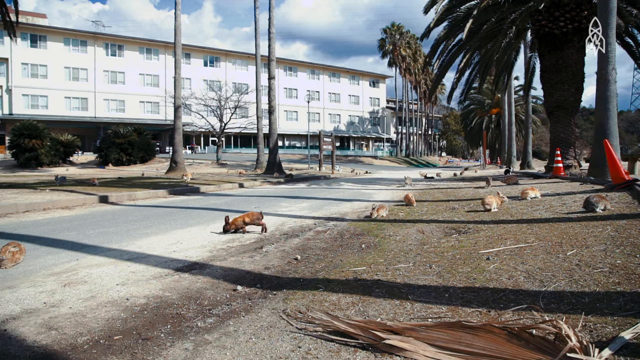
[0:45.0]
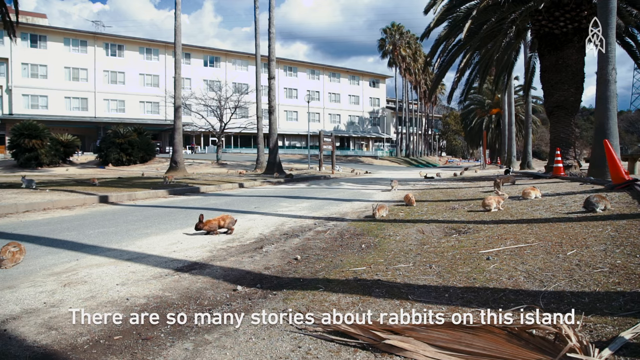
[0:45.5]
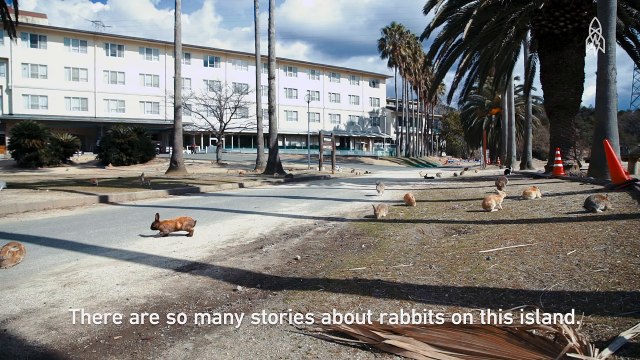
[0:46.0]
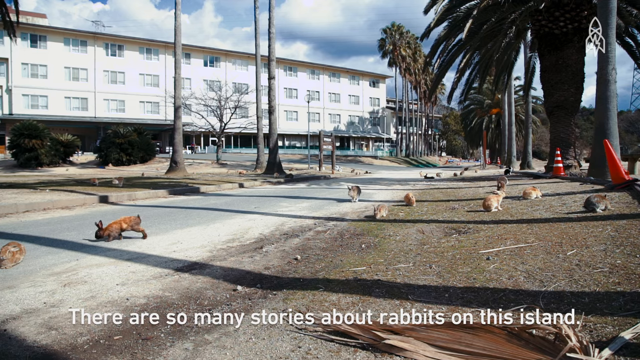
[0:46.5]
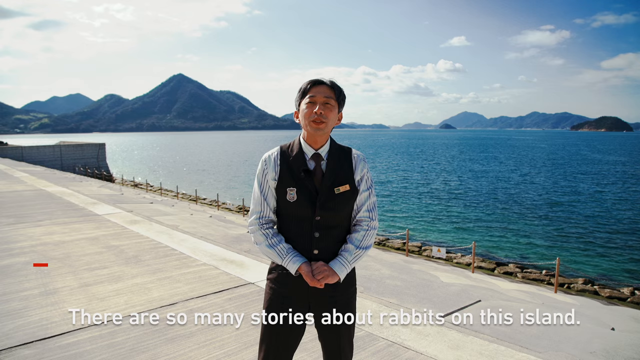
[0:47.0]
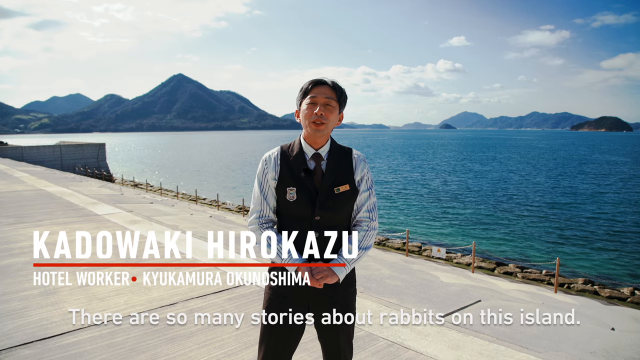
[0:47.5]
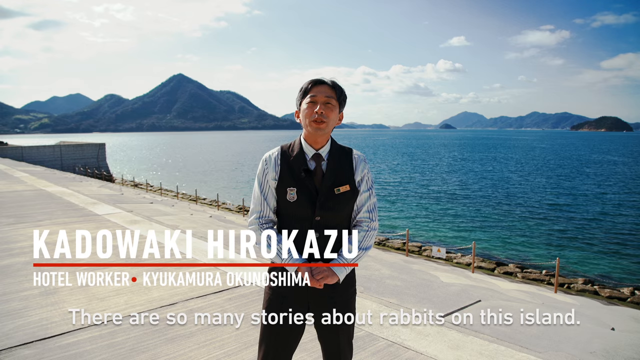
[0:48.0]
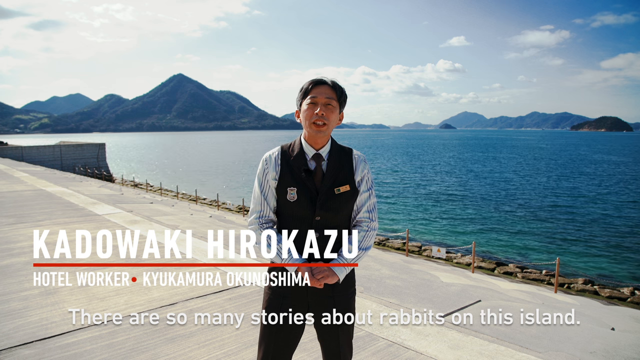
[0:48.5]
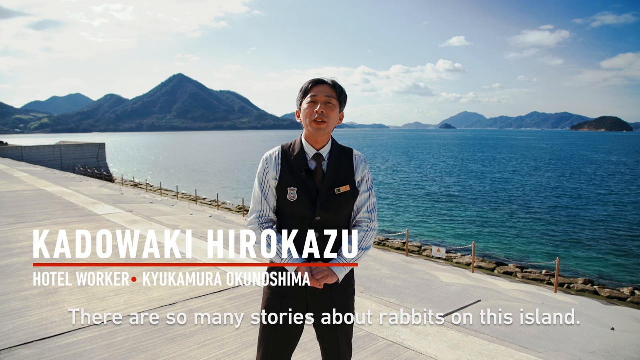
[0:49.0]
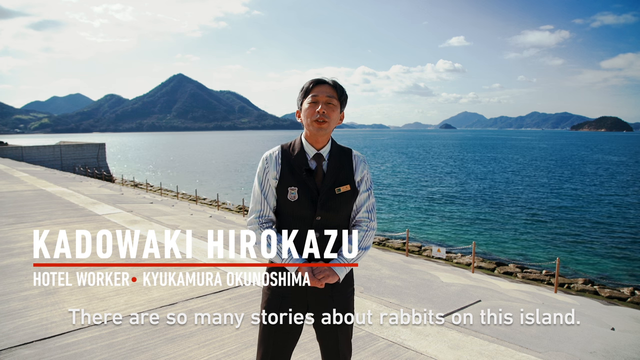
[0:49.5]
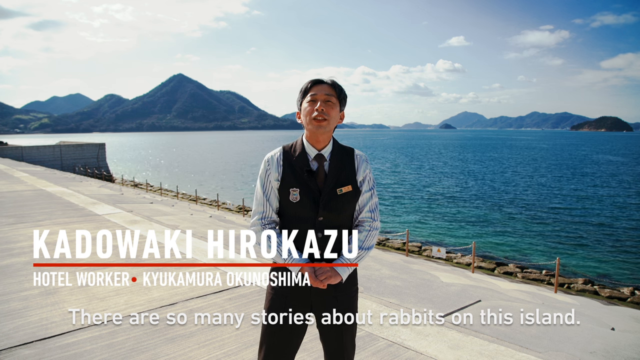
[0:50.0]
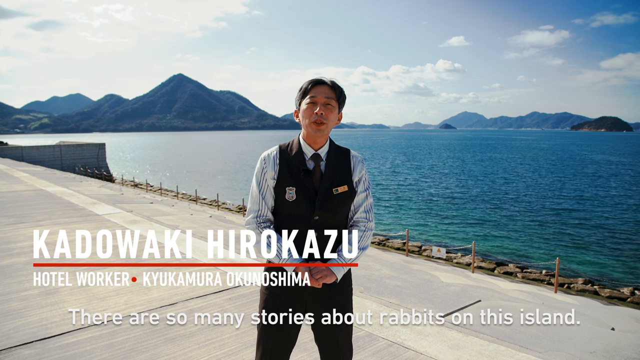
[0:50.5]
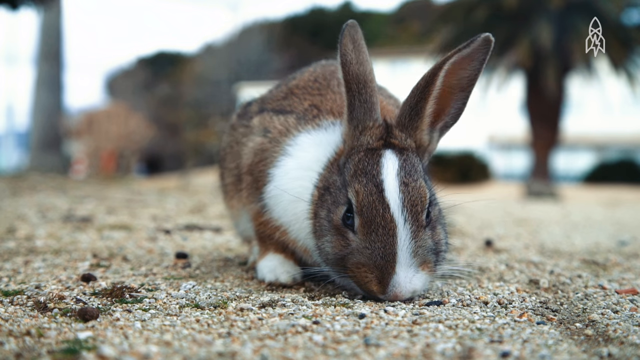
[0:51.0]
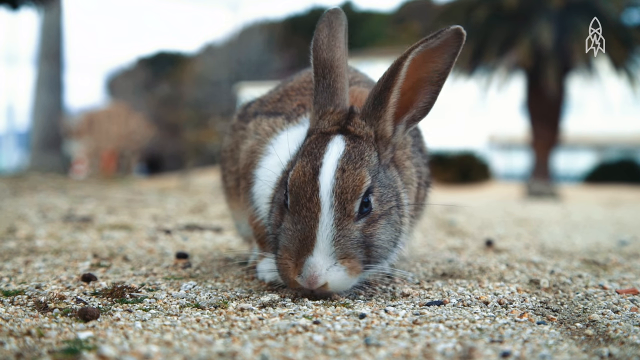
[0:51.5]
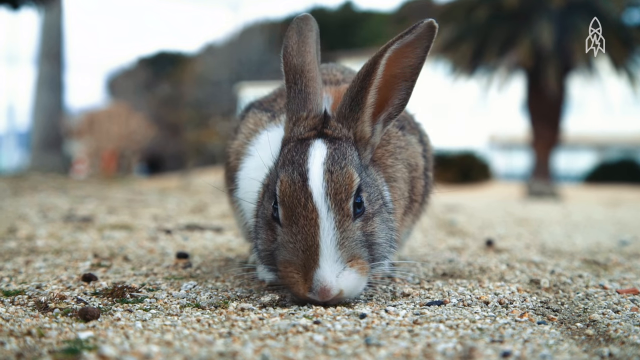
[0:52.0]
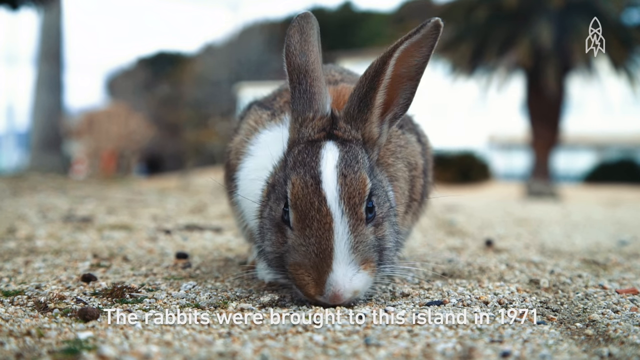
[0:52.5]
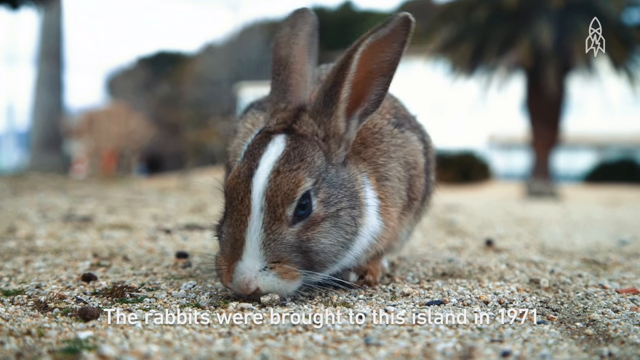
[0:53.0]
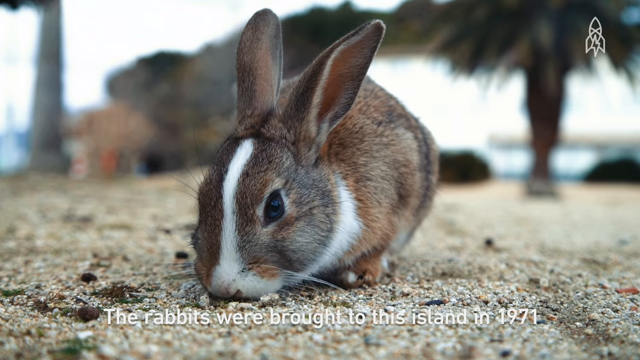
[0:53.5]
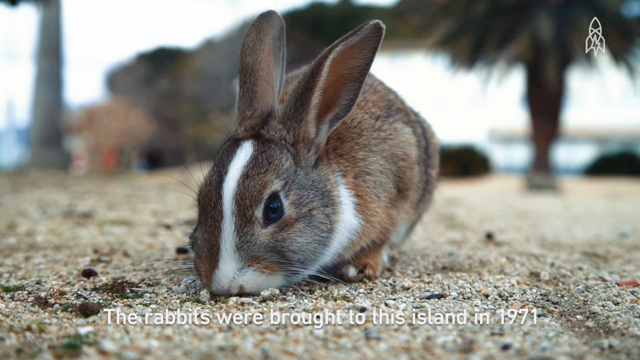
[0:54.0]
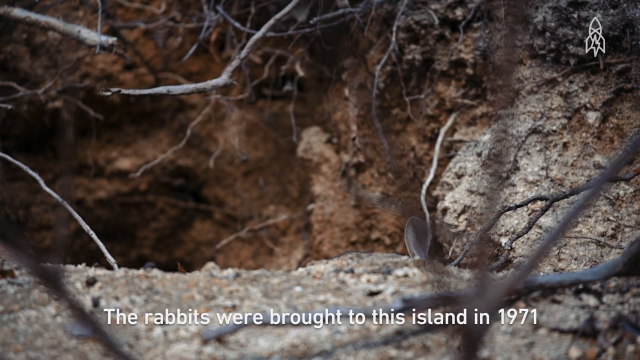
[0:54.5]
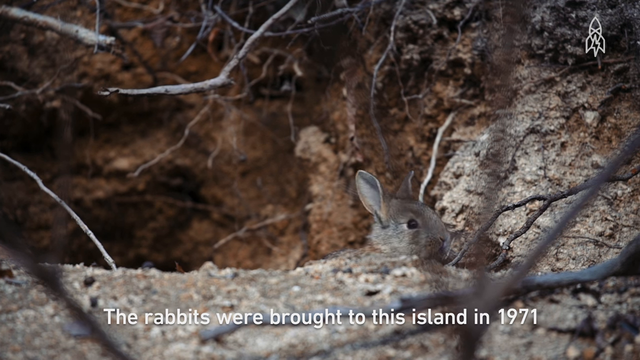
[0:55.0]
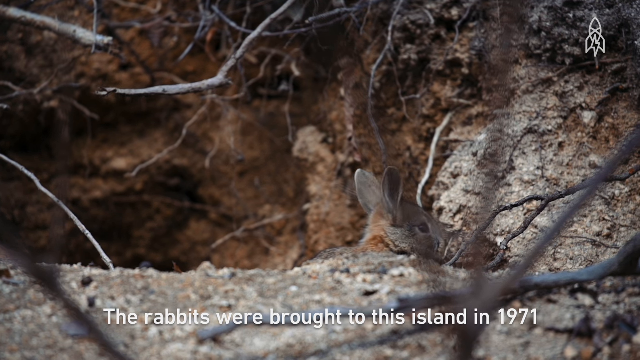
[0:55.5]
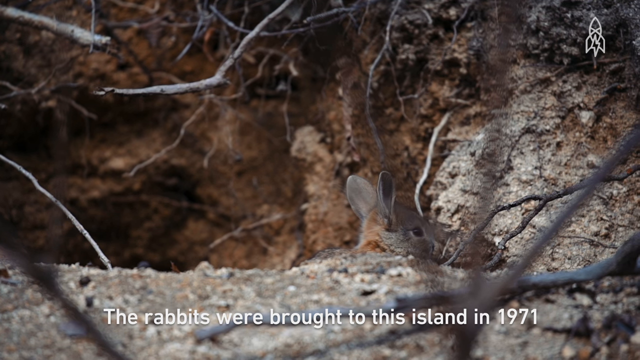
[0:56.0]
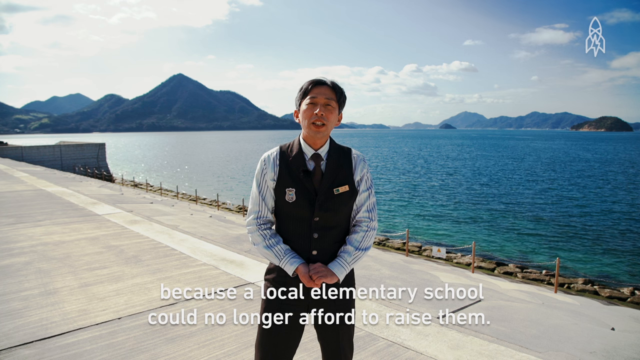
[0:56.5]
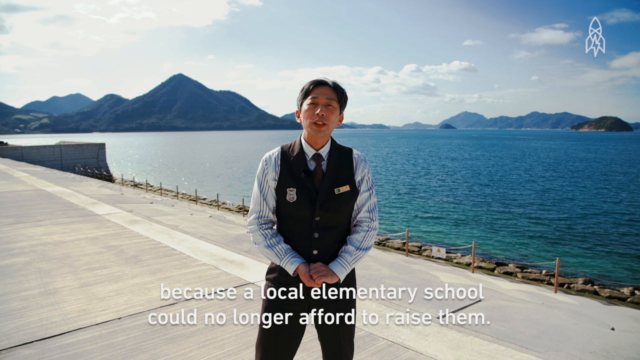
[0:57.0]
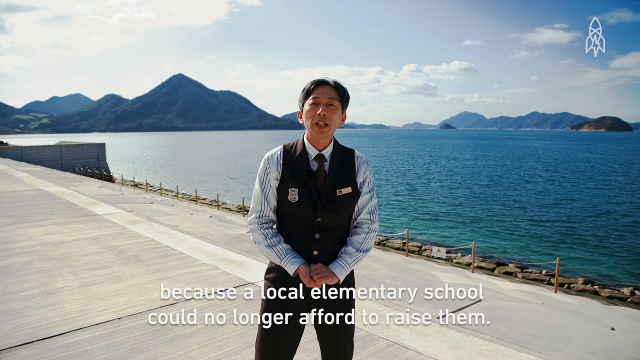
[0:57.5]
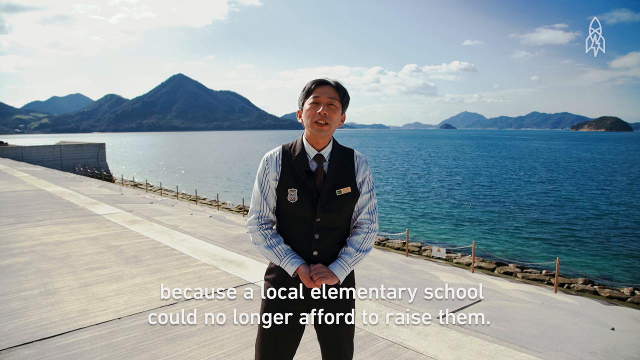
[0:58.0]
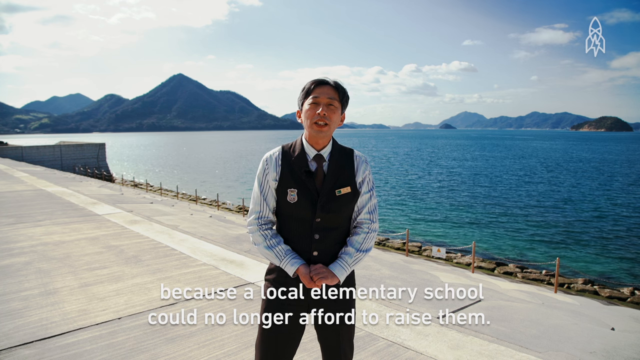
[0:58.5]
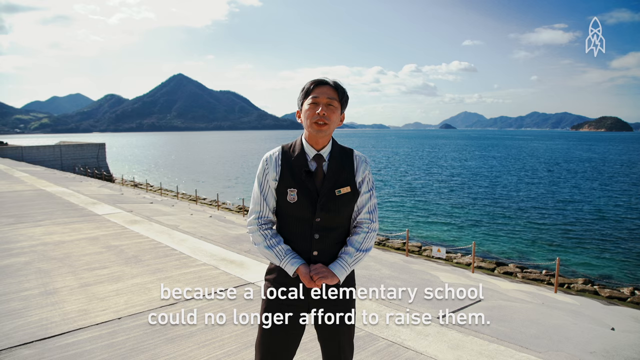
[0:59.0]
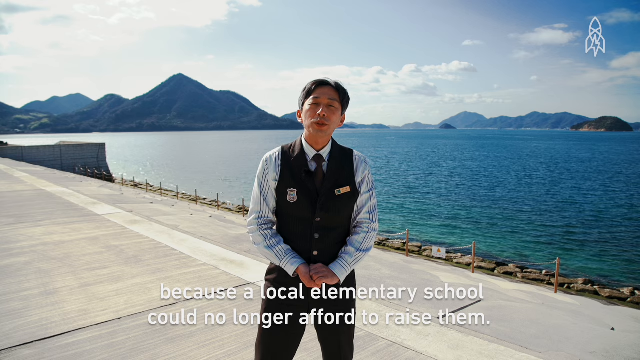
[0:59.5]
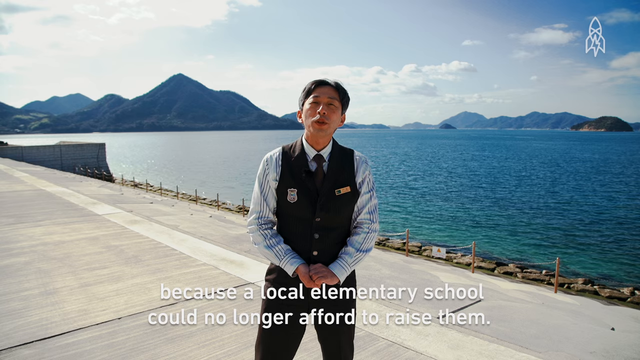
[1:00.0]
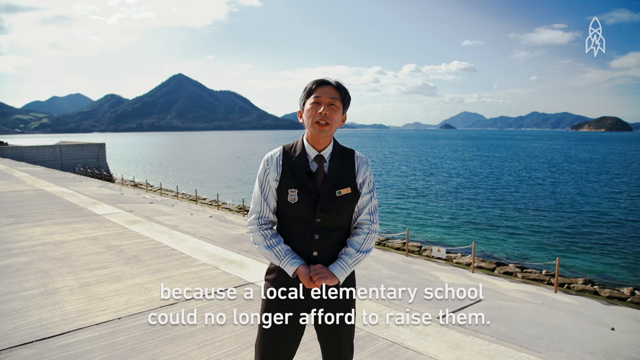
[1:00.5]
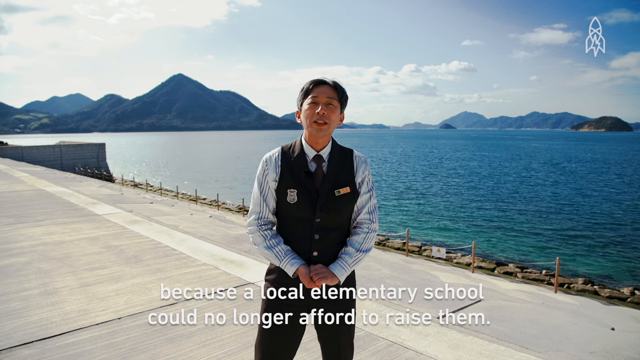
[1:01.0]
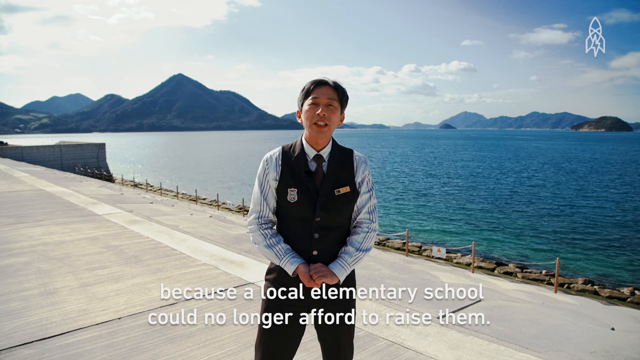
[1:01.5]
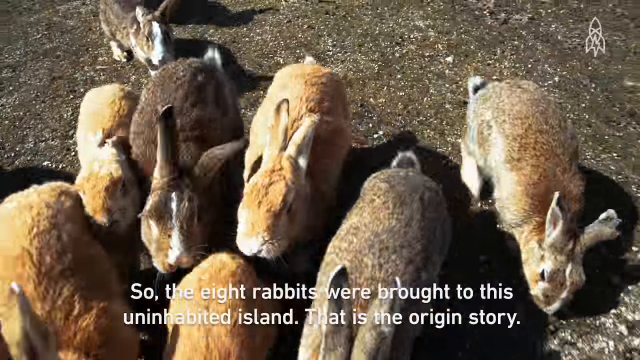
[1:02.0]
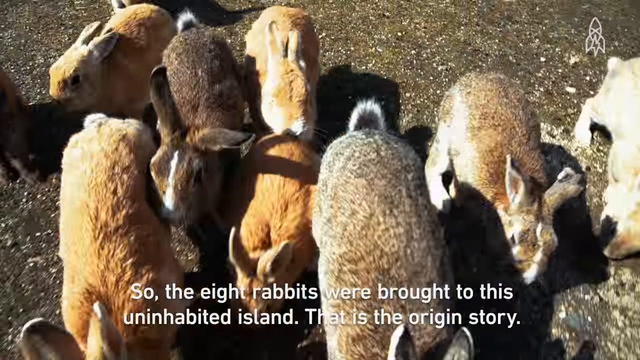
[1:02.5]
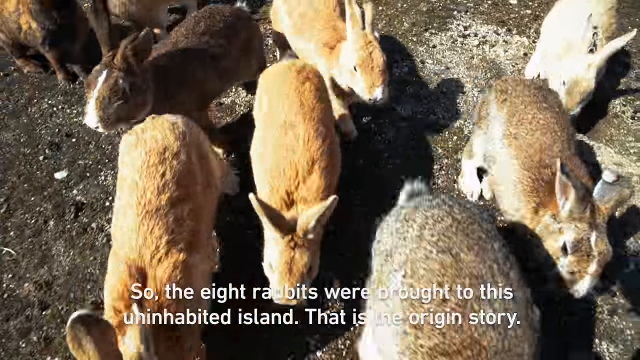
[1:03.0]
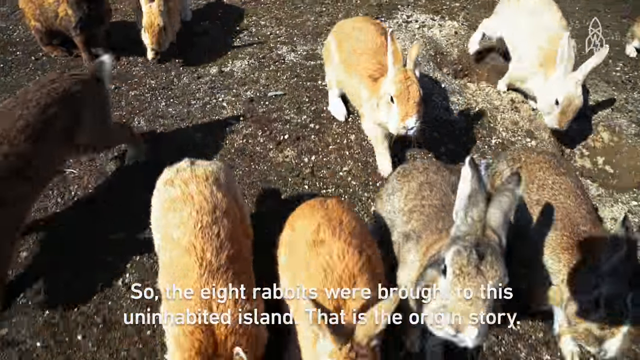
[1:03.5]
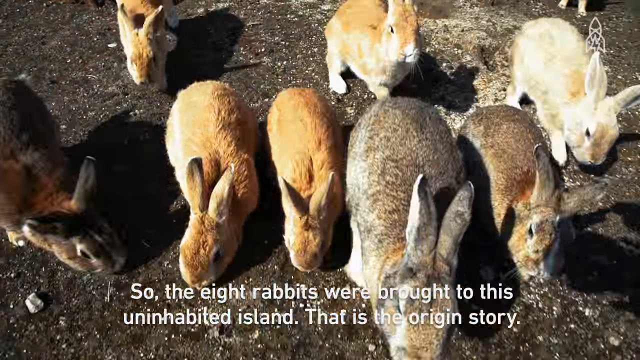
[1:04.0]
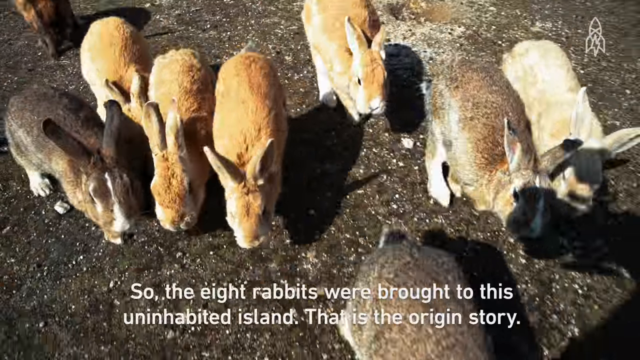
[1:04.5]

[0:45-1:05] Bunnies are in a pastoral area, then the video switches to a man standing in front of the camera, apparently talking. Behind him is a view of a blue ocean. On the screen his name appears along with "hotel walker"; he seems to be a hotel worker being interviewed, possibly about the place and its environment. Bunnies are everywhere, looking like they are nibbling things with their mouths and trying to find food.